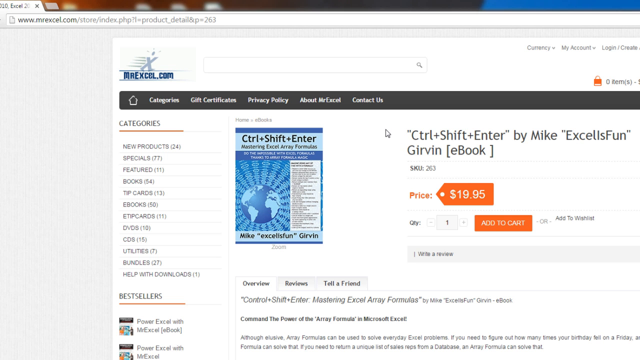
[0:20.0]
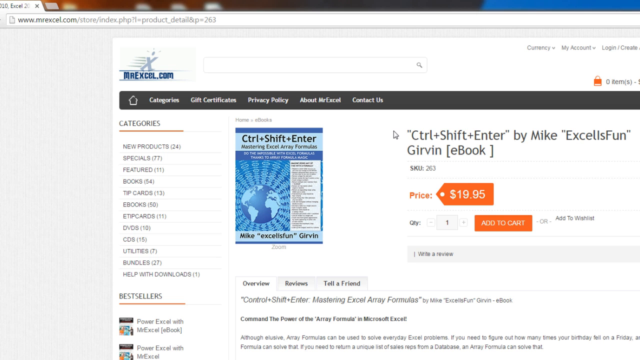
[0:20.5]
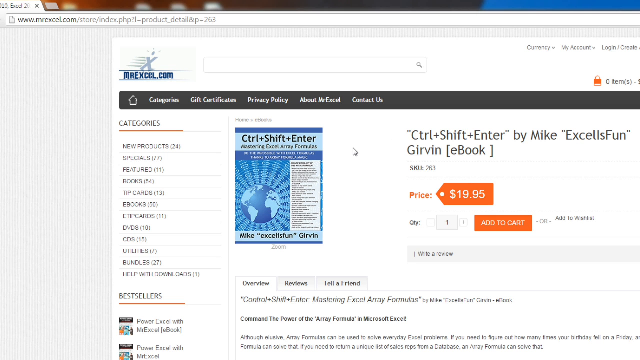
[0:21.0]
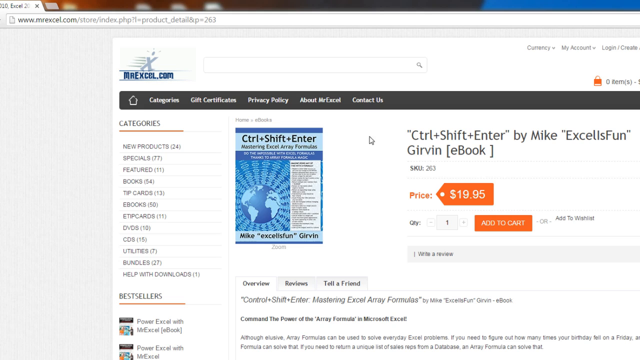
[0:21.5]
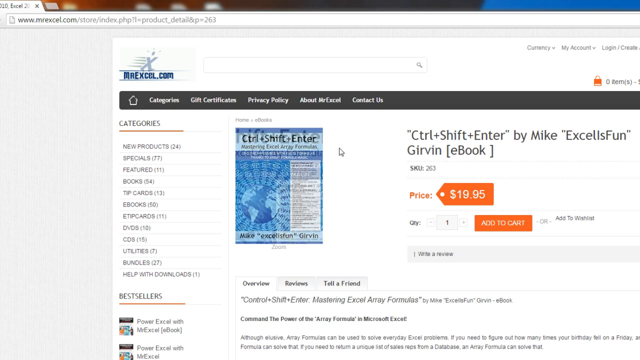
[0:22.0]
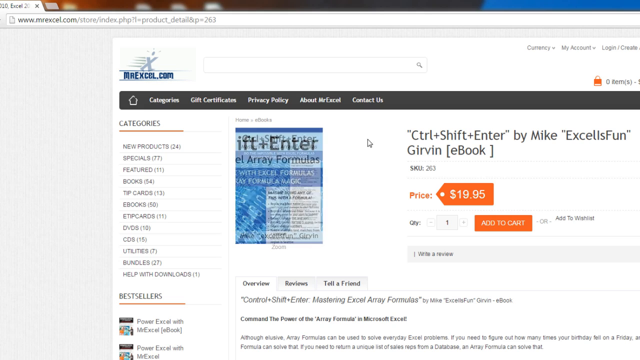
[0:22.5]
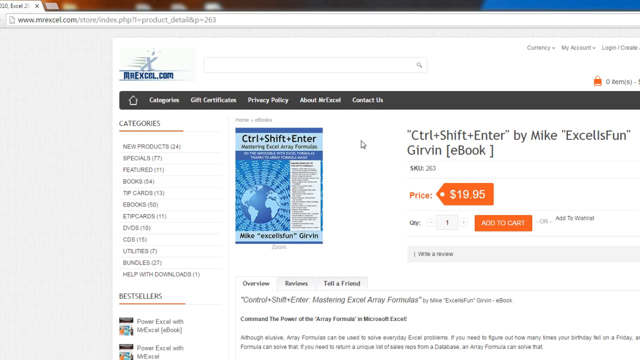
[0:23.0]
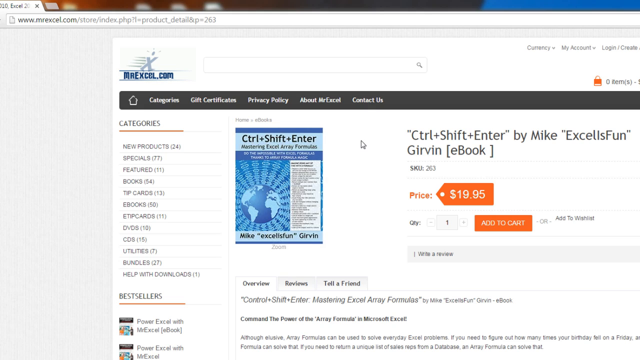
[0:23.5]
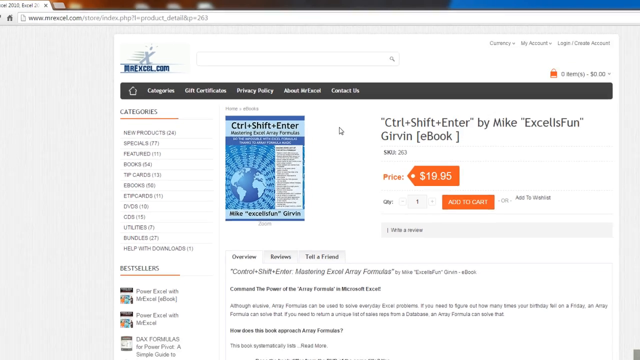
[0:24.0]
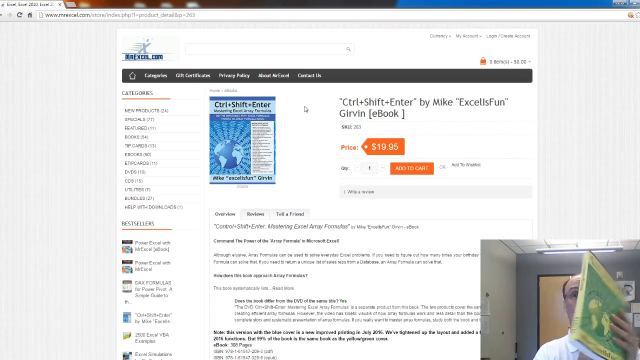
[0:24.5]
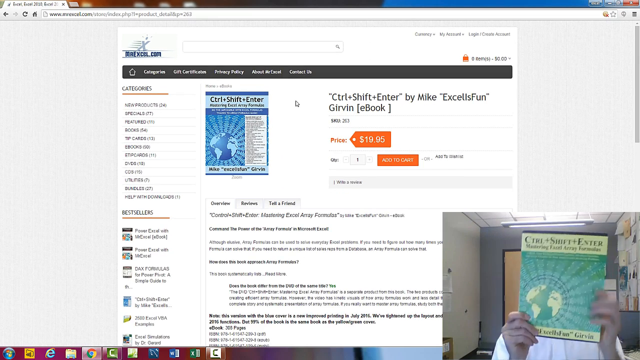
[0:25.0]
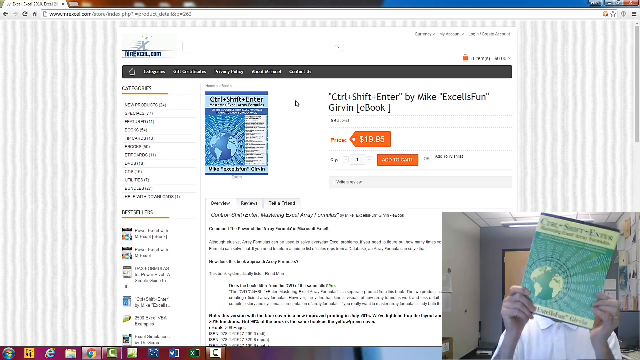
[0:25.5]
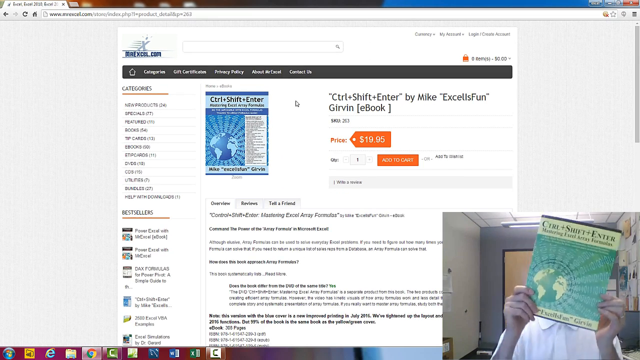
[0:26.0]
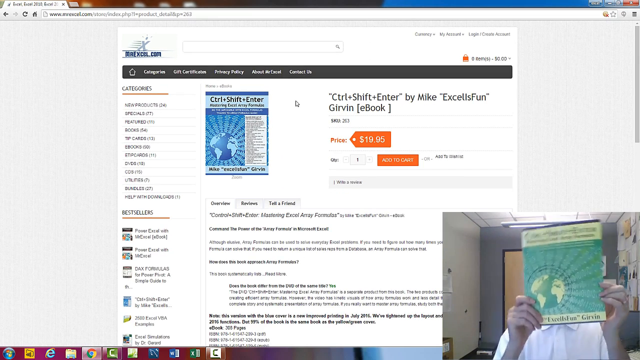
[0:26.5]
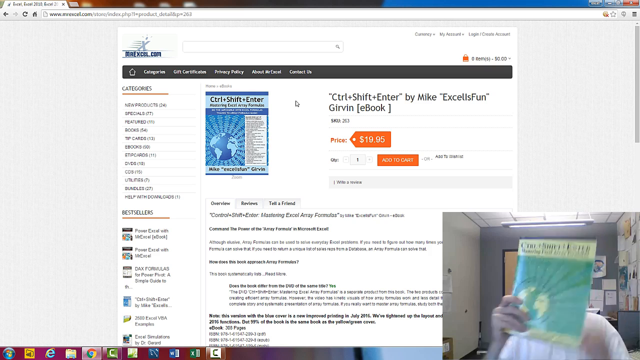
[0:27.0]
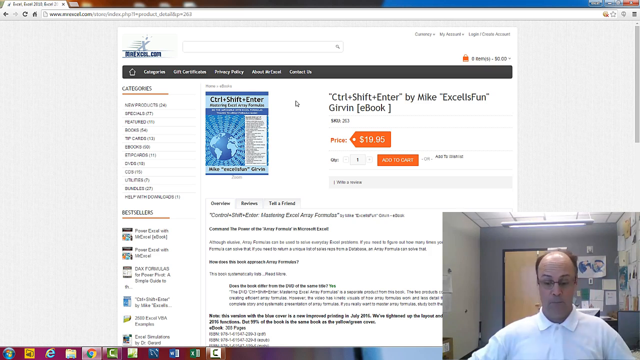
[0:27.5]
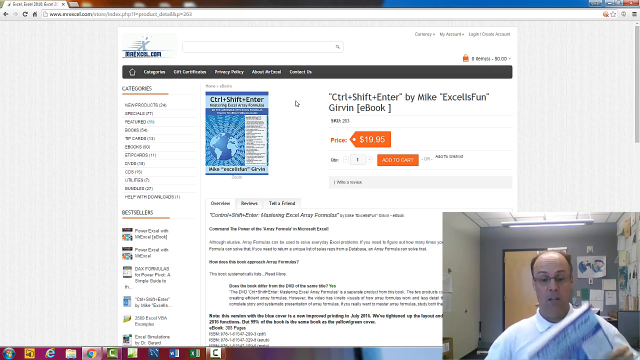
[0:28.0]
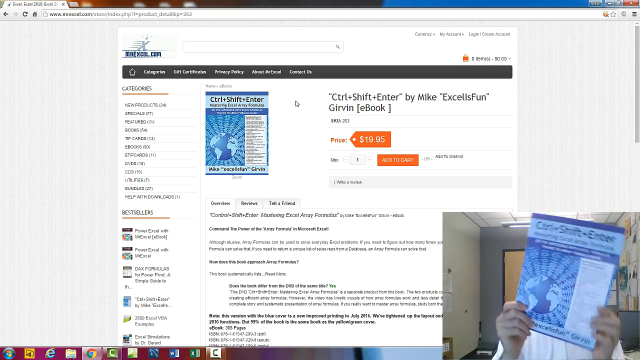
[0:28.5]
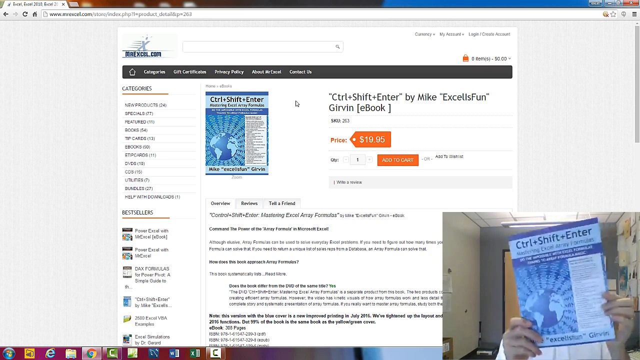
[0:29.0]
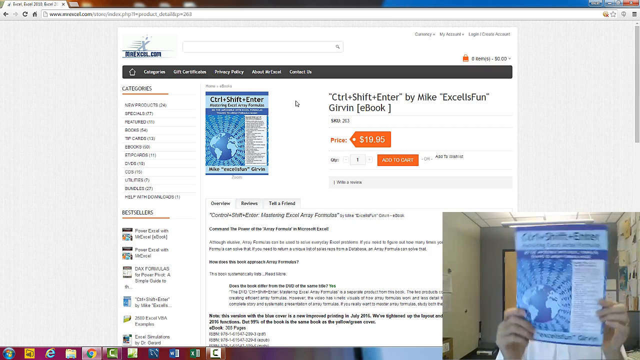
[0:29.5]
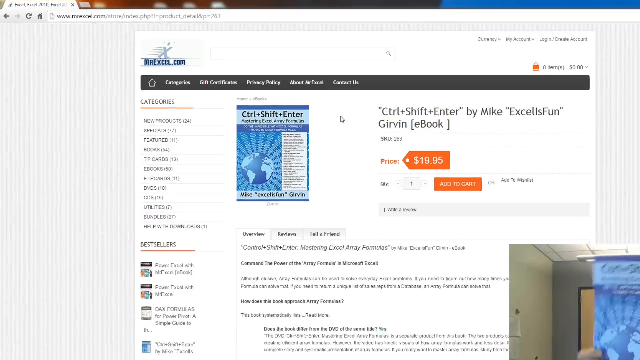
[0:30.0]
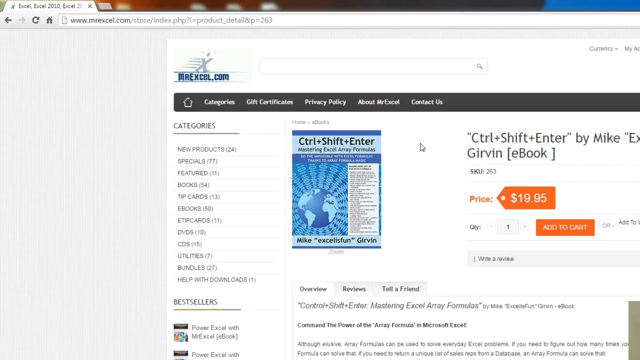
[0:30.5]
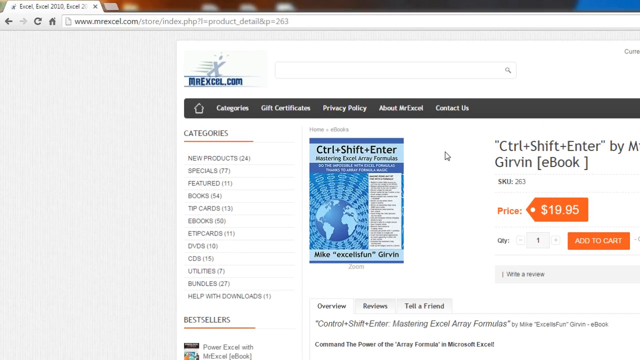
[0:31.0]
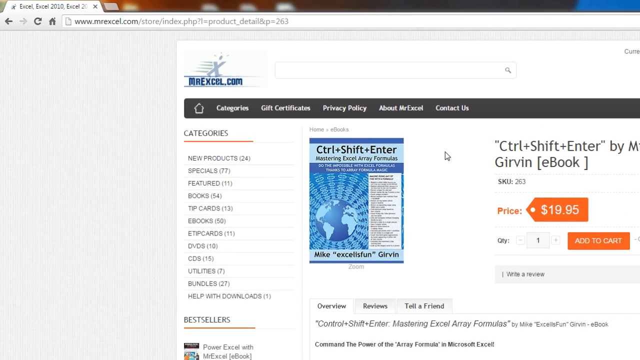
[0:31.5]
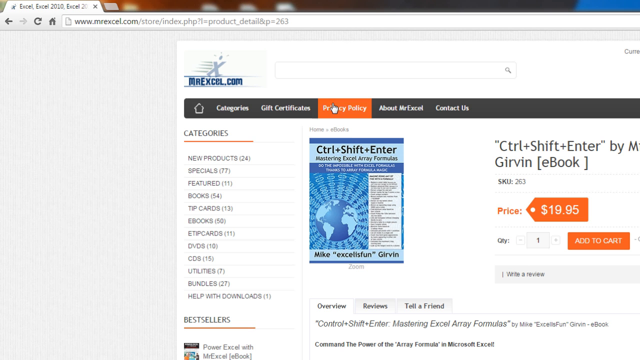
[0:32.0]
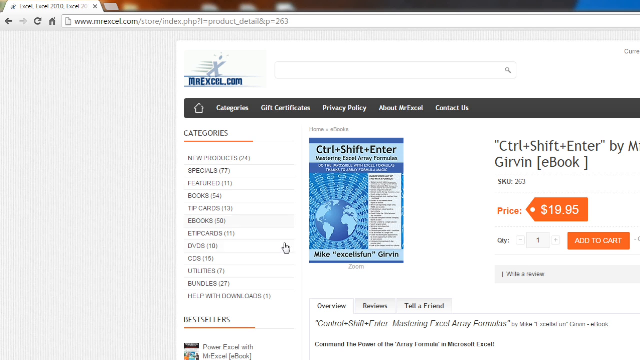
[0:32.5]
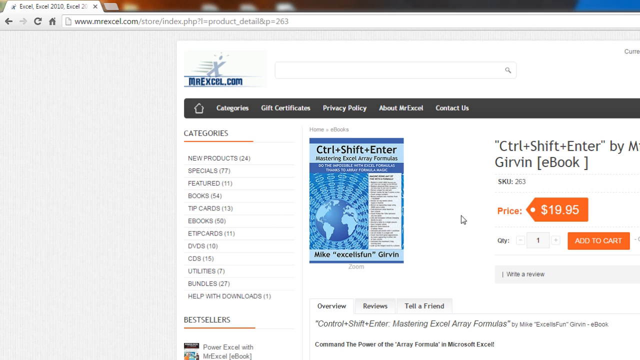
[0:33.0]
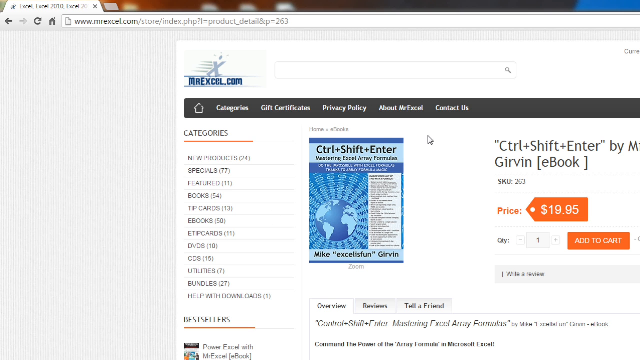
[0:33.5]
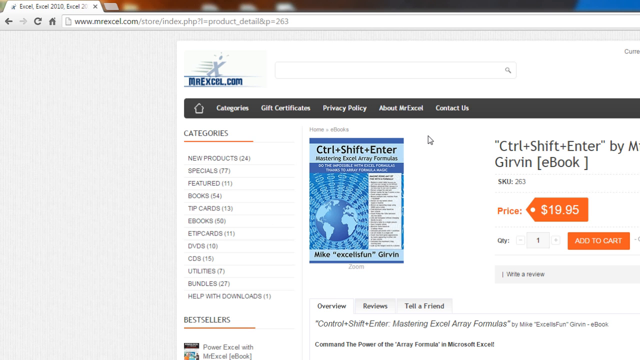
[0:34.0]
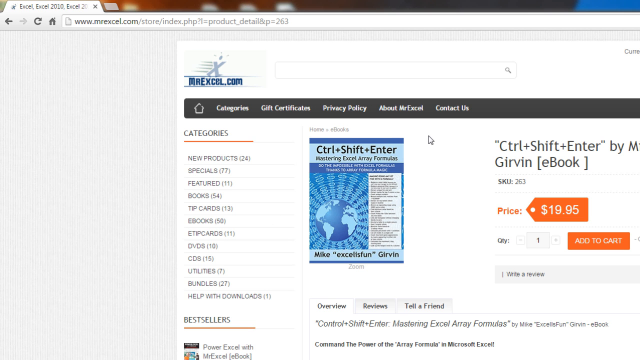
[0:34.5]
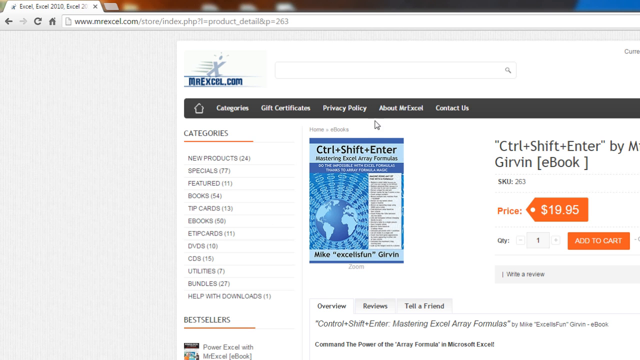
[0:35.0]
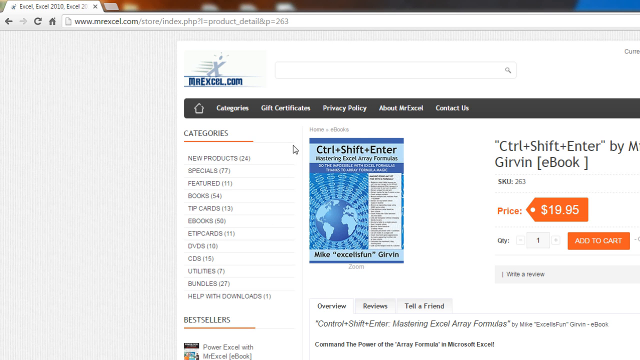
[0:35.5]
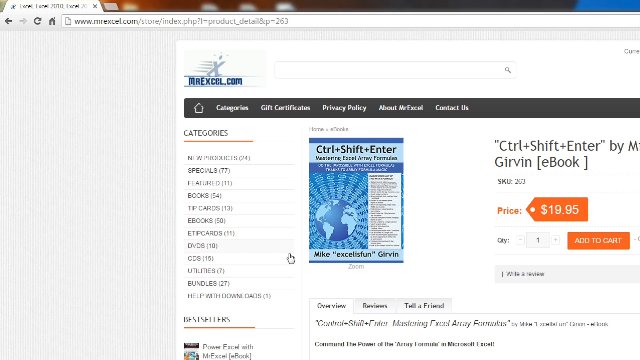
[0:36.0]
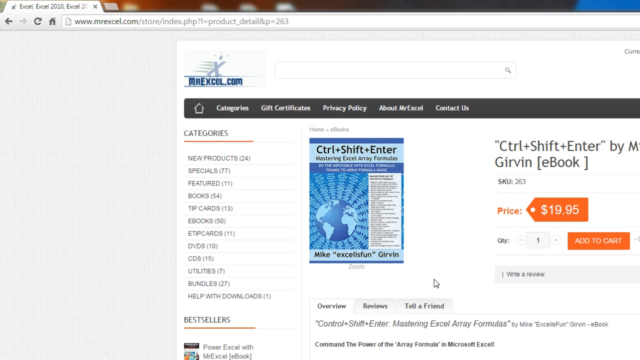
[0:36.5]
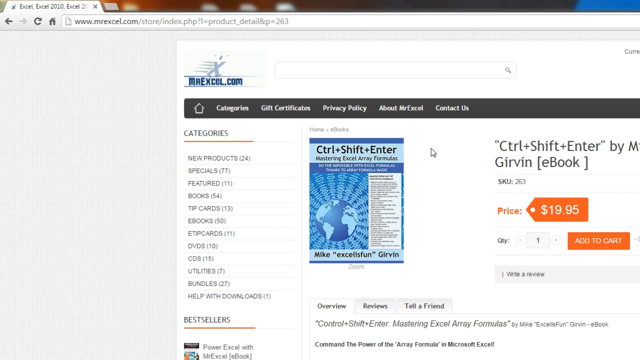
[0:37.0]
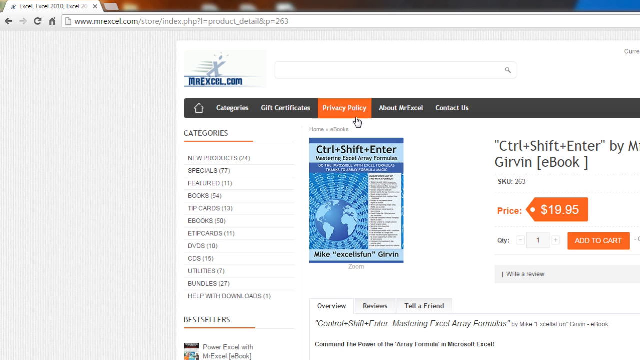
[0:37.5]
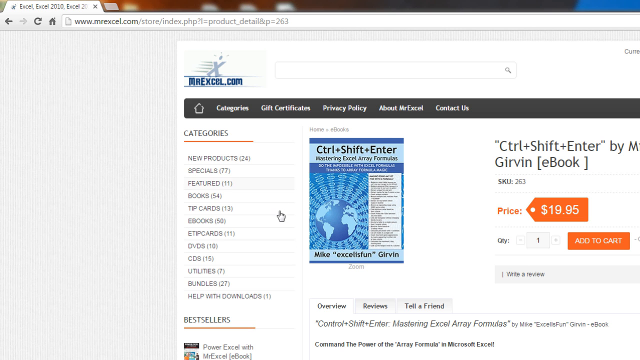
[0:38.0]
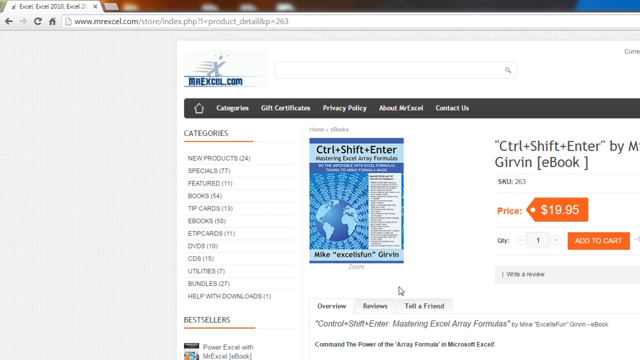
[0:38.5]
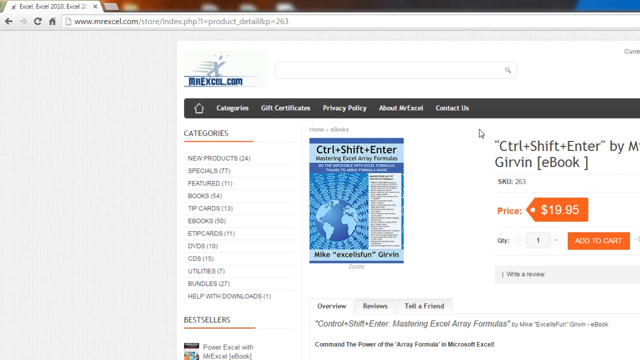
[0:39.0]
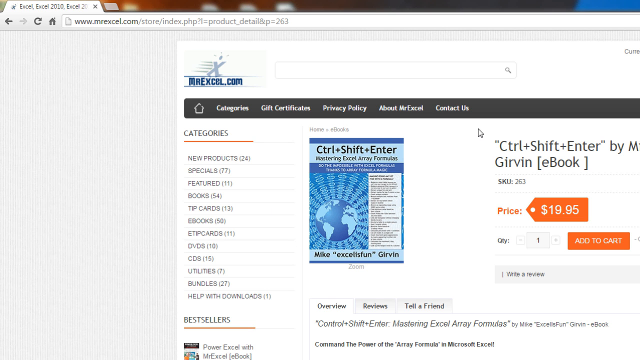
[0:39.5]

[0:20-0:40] Someone is recording their desktop computer screen, with a web browser open to the MrExcel.com webpage and a product shown: the Control plus Shift plus Enter by Mike Excel's Fun Gervin eBook, listed at $19.95. The user rapidly moves the mouse cursor left and right repeatedly in a shaking motion in the small space between the picture of the book's cover and the book's name and pricing on the right. The view then zooms out and shows a webcam video of someone holding the same book in a physical version. The eBook's cover is pictured as blue, but the physical version is yellow and green. The person puts the book down and reveals his face: an older man who is balding but still has hair on the sides and back of his head, wearing glasses and a white polo shirt with all the buttons buttoned up. He then holds up a different book with the same title and author, this one blue instead of yellow and green. The view zooms in towards the top left of the webpage, and the user circles the mouse cursor around the pictured eBook cover three times.